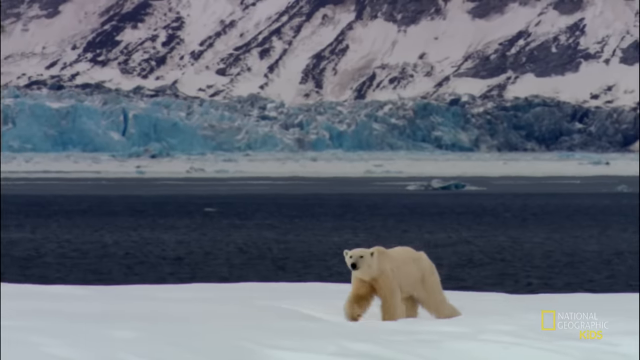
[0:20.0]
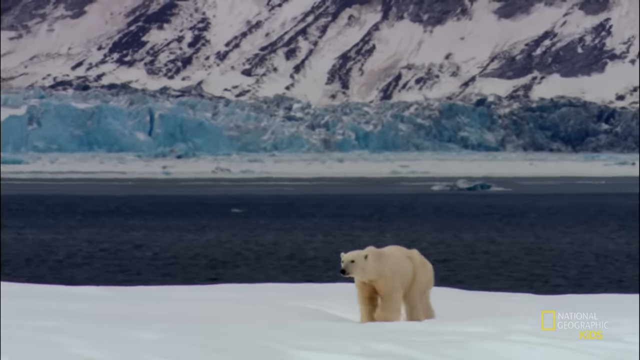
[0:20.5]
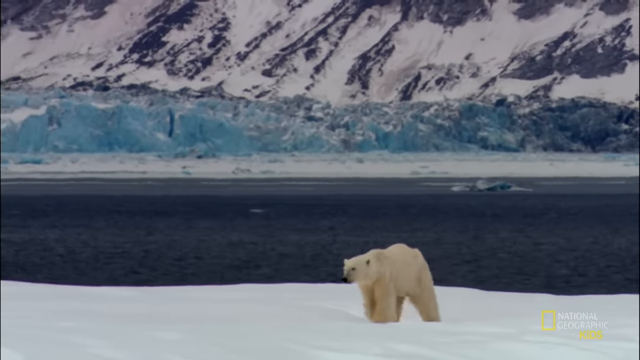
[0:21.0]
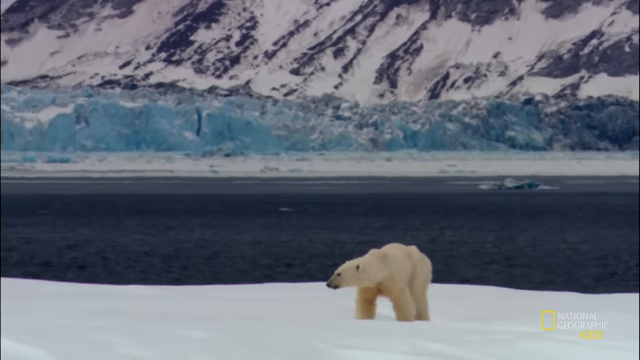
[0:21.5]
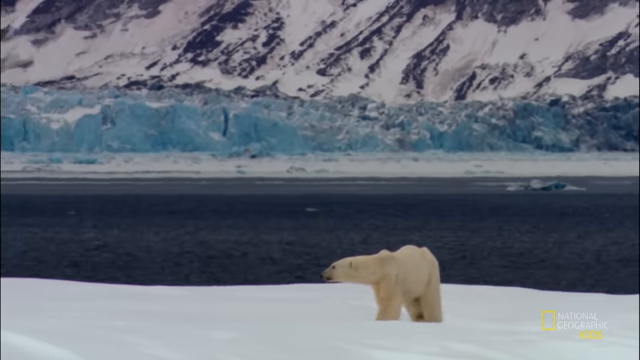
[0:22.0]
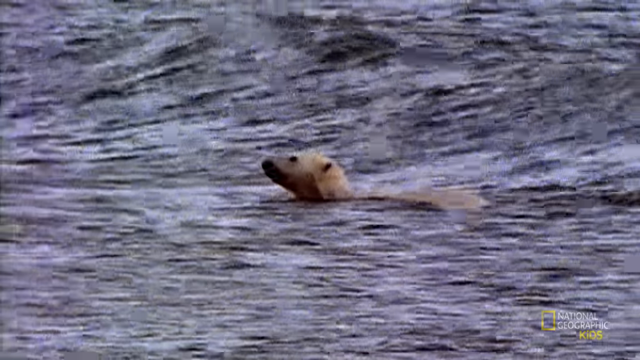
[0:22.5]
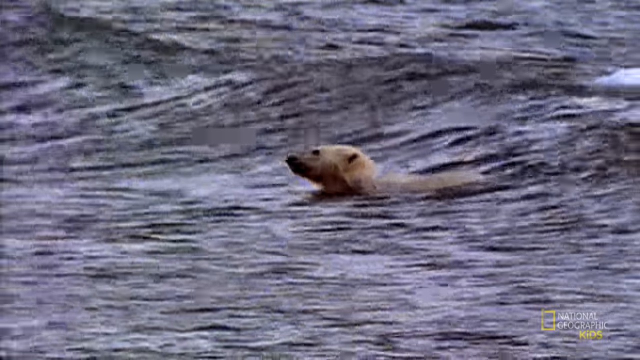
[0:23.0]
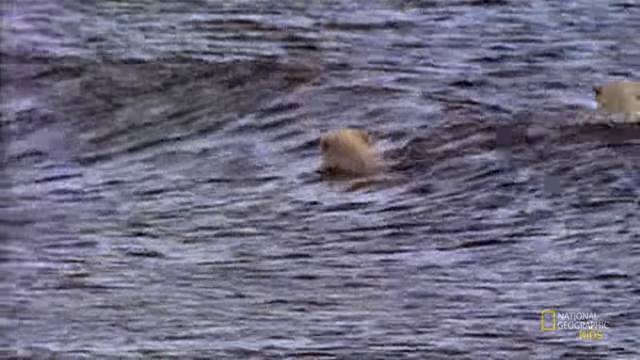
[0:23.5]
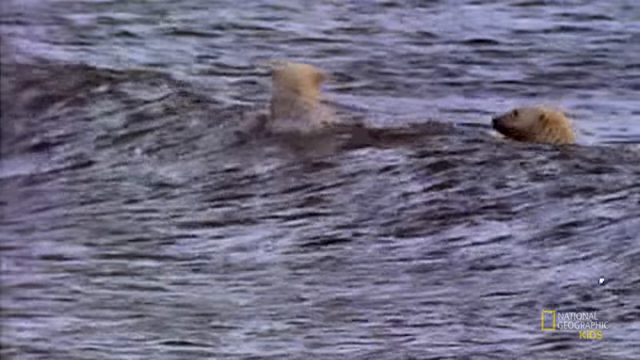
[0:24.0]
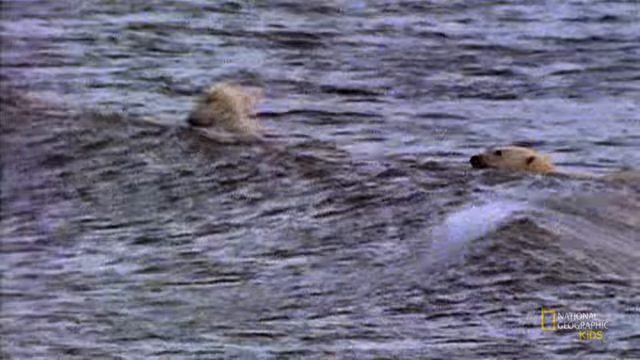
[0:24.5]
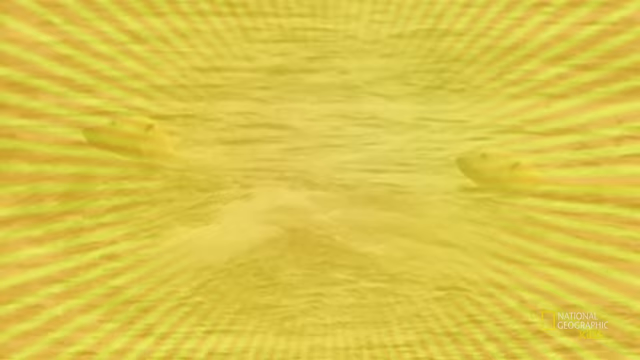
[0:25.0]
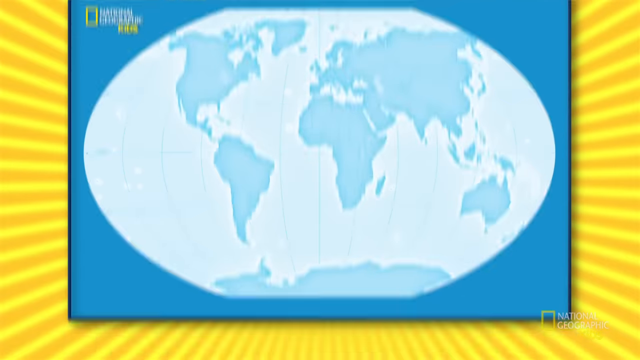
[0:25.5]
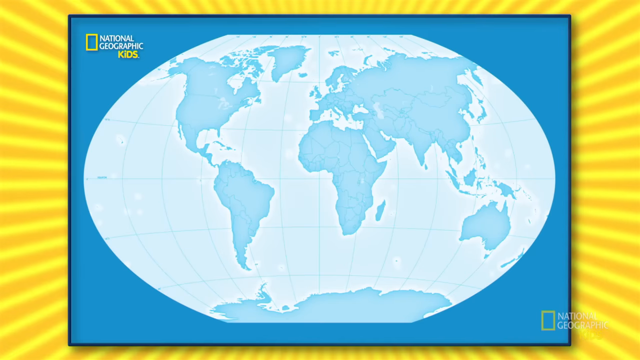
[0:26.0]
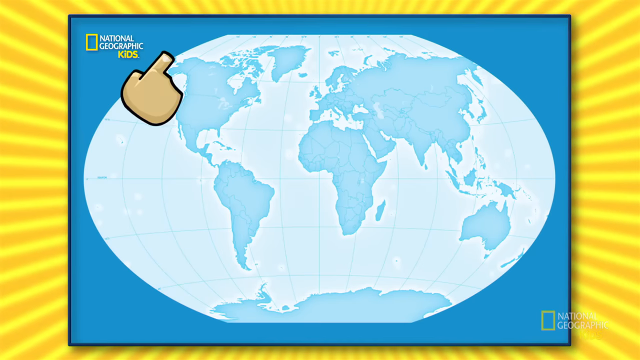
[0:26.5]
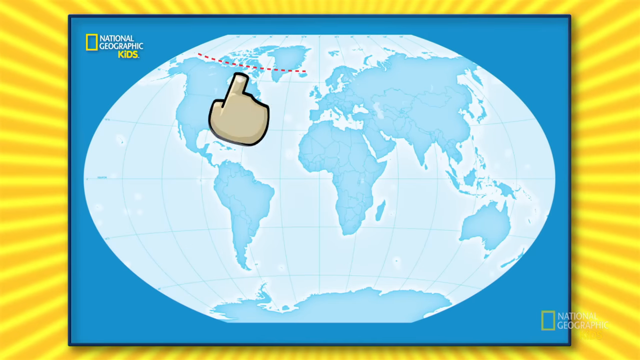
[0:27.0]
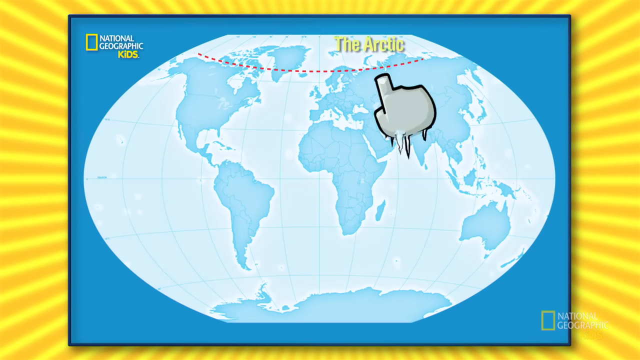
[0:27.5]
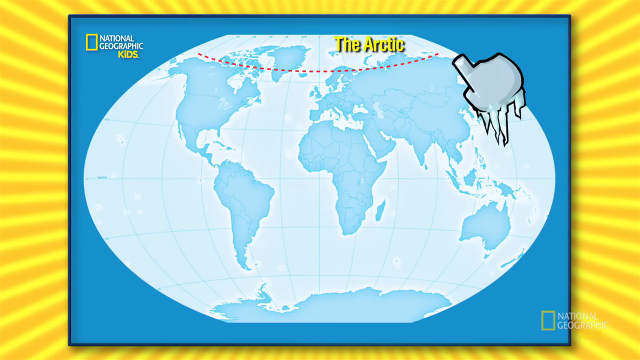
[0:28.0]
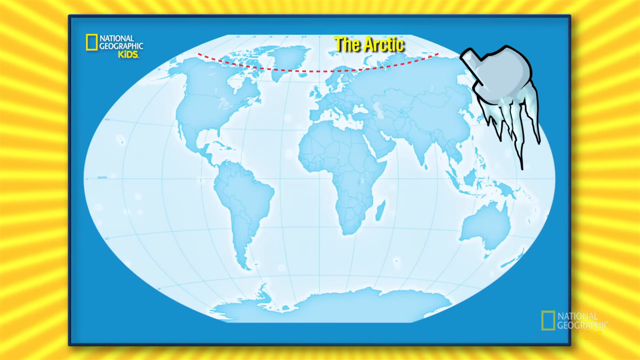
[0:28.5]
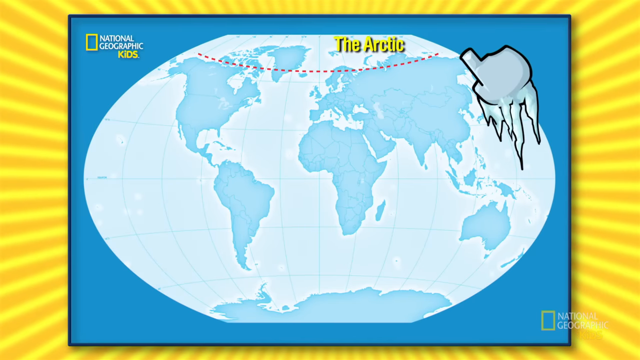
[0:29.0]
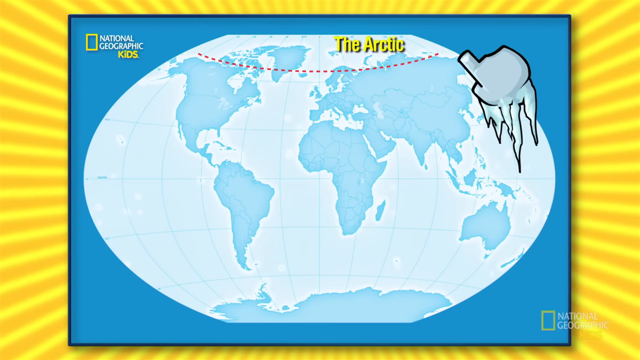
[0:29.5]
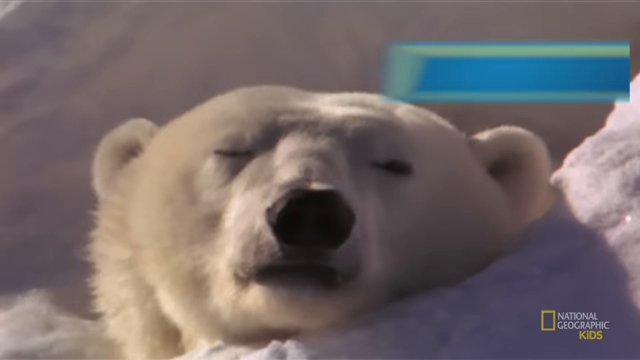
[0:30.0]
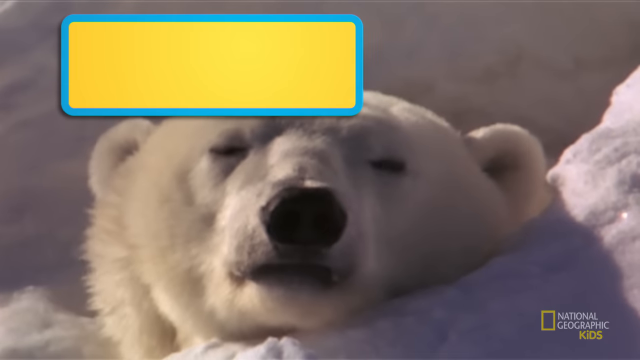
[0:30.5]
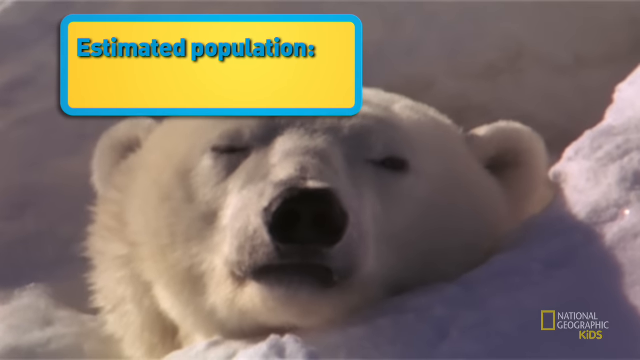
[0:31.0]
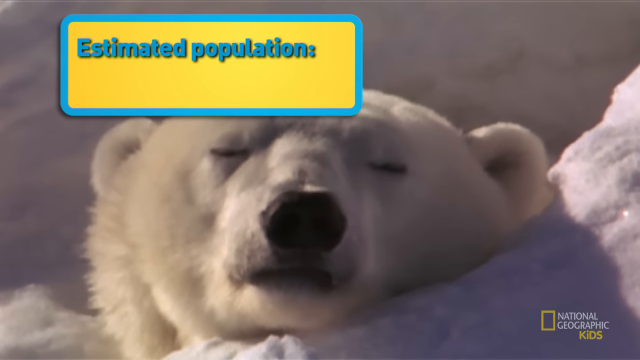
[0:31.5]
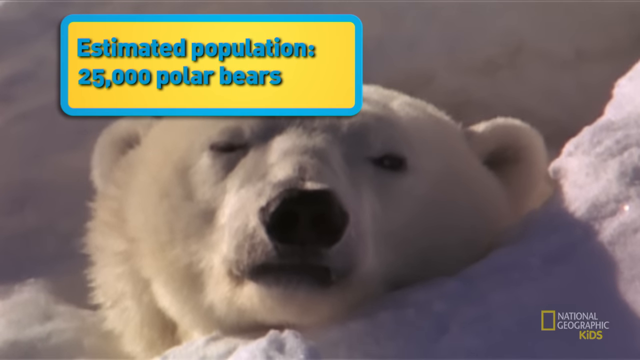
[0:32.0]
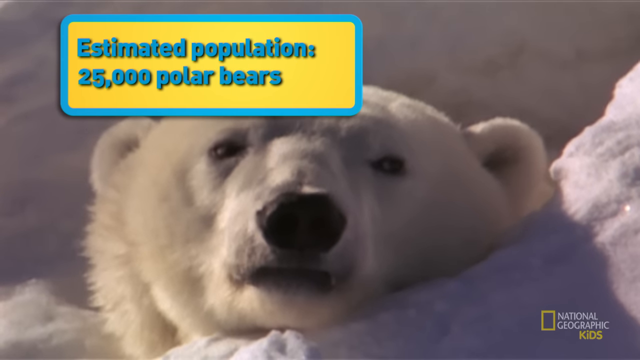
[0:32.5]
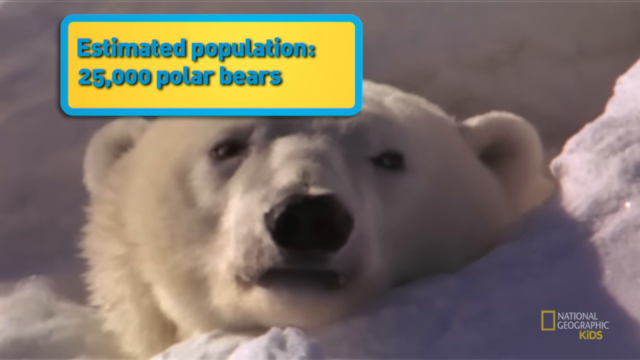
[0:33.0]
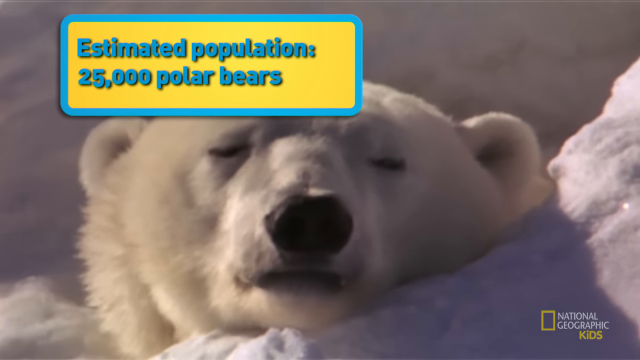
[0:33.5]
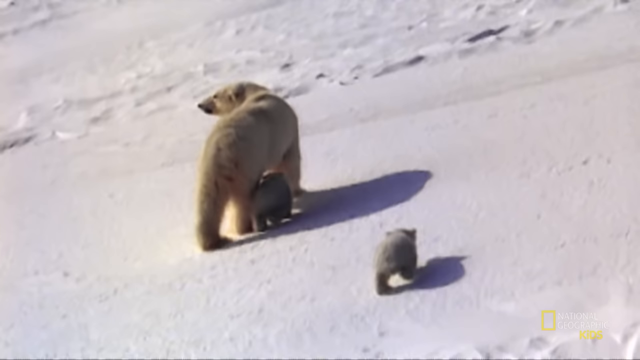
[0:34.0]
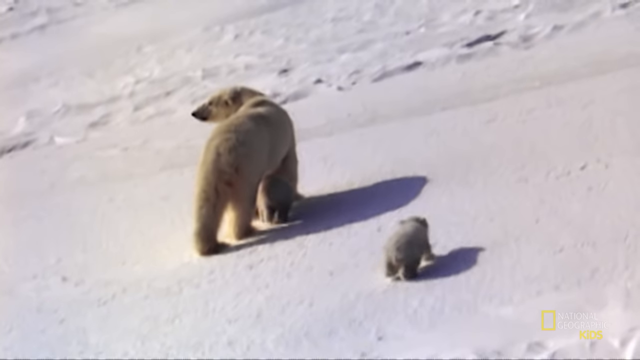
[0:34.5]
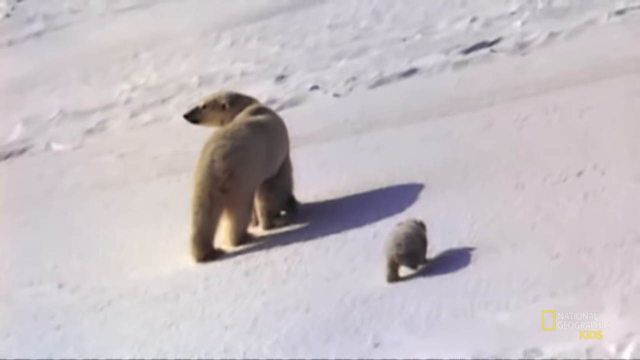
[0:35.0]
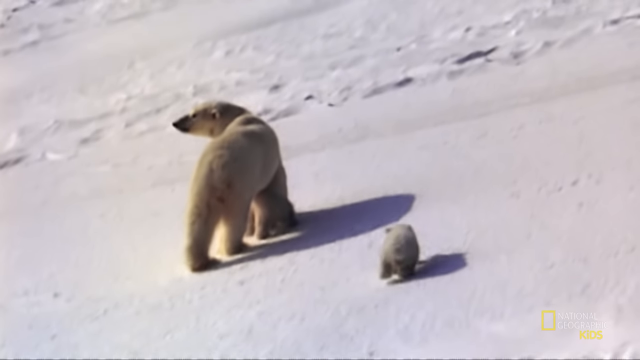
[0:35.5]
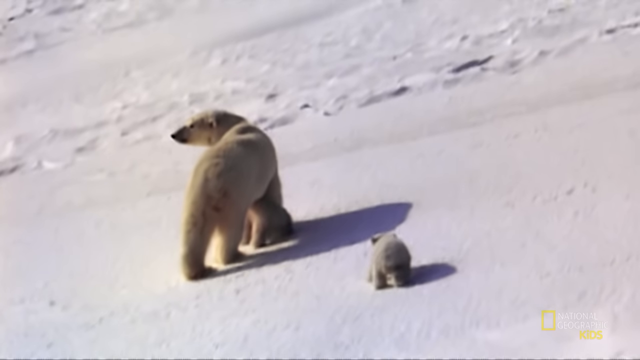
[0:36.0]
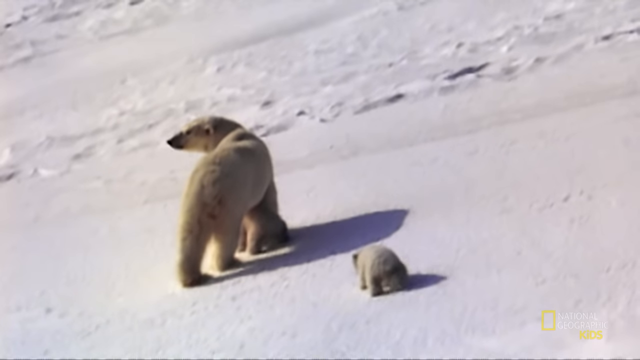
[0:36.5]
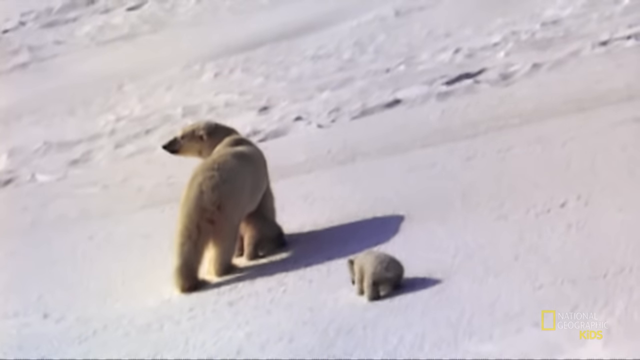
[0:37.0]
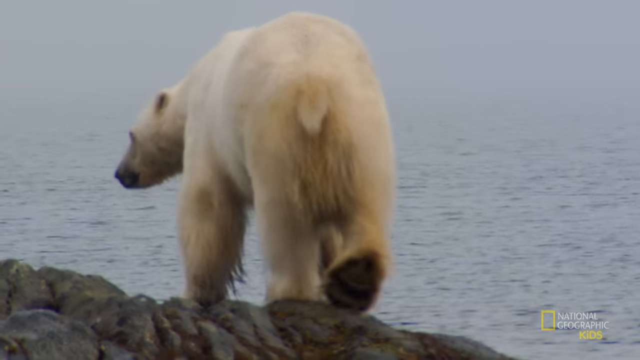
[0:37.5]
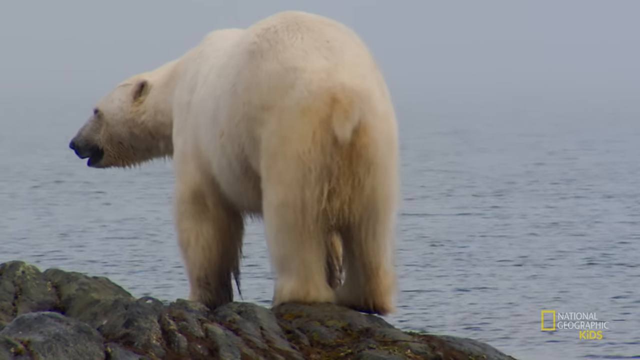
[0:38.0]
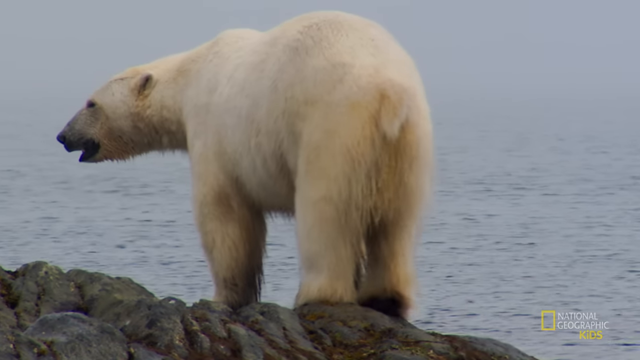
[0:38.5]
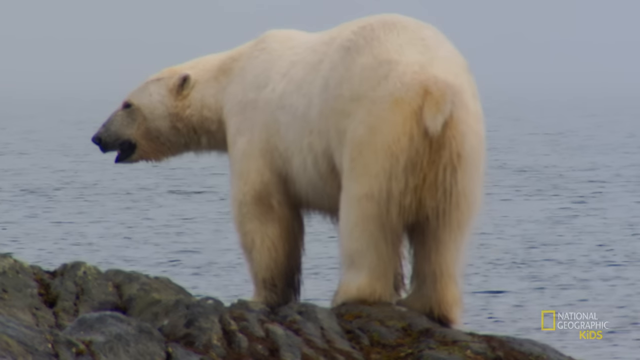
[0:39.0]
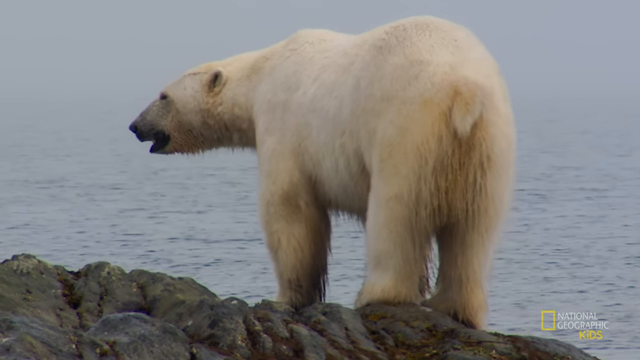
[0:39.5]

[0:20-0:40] A polar bear walks by himself on land very close to some water, then swims in the water with another polar bear; they go up and over the waves. A map comes down in a square. The map is light colored, with darker shadings for the land, and "National Geographic kids" with a yellow square is in the upper left-hand corner. Behind the map are rays that look like rays of sunshine, alternating orange and gold. What looks like a melting icicle goes from the left side of the globe to the right side, and the words "the Arctic" appear in the upper portion. A polar bear that looks very sad has its head on the snow, and text reads "estimated population 25,000 polar bears." A polar bear with two babies is shown, then another one on the land; it is muddy underneath and looks very wet.